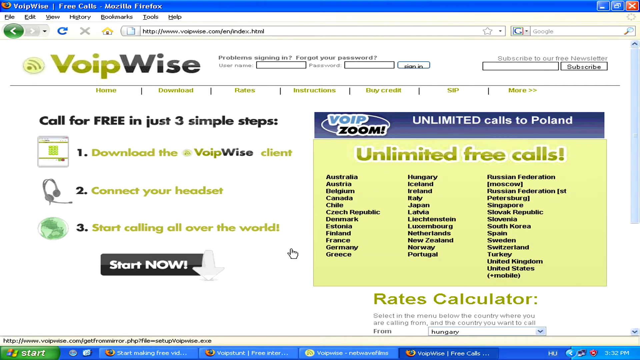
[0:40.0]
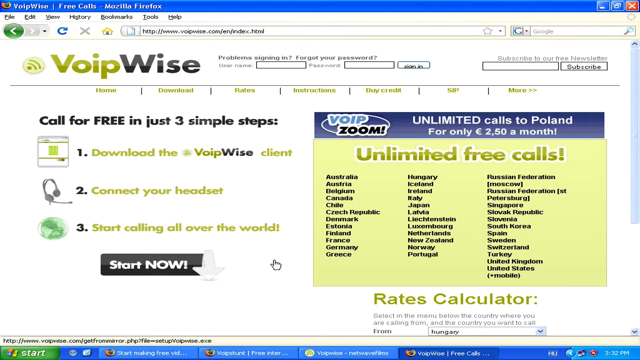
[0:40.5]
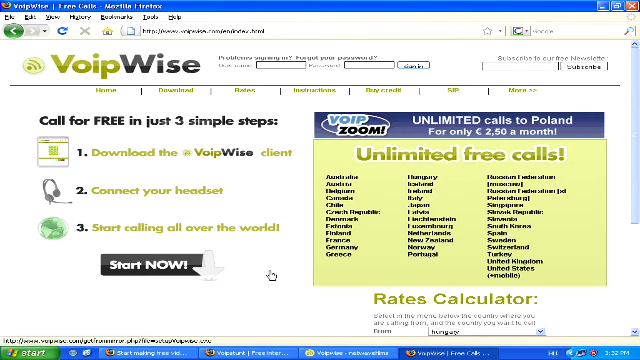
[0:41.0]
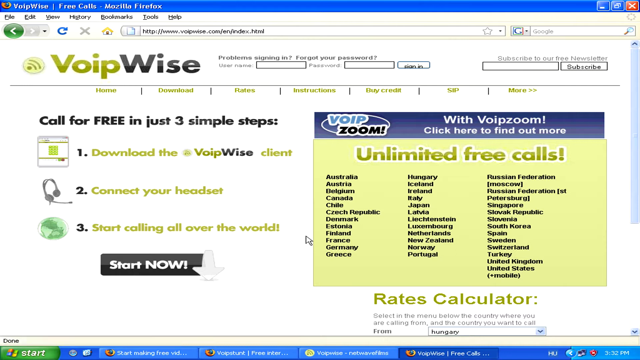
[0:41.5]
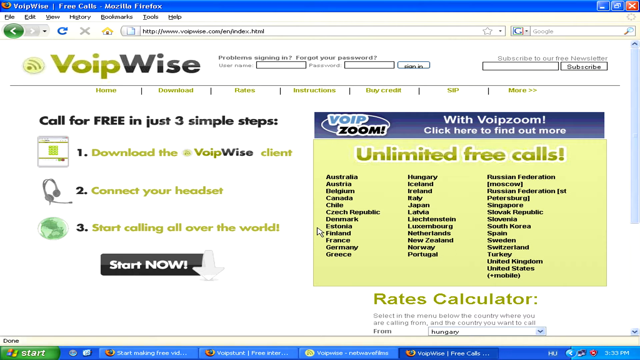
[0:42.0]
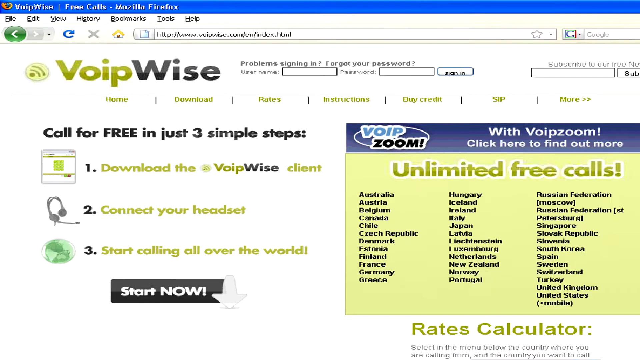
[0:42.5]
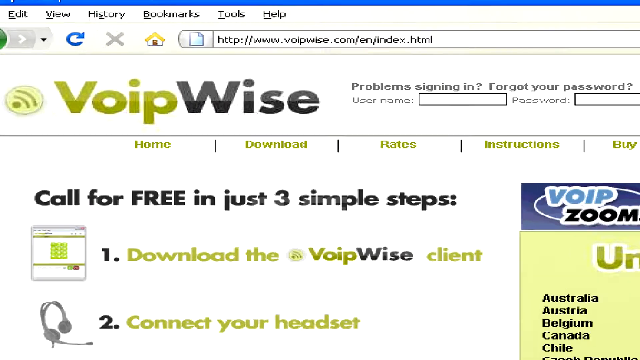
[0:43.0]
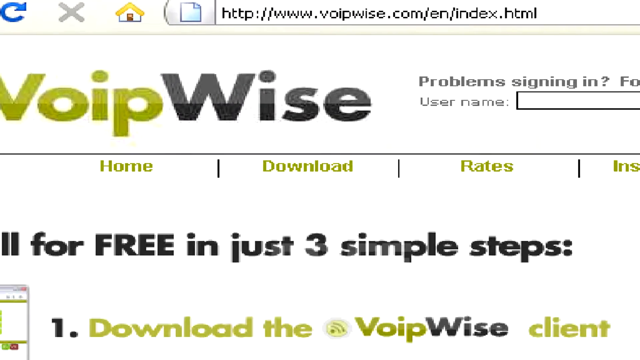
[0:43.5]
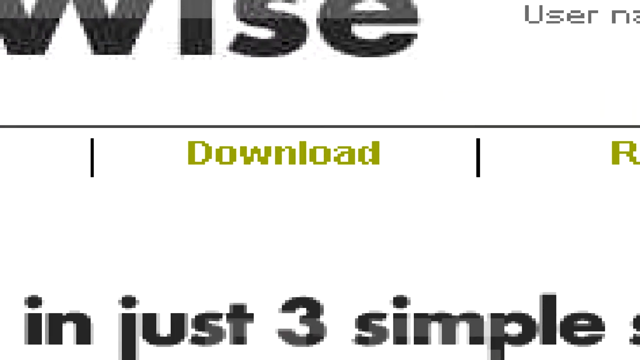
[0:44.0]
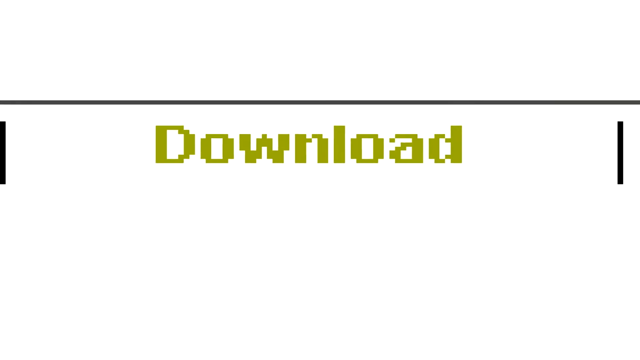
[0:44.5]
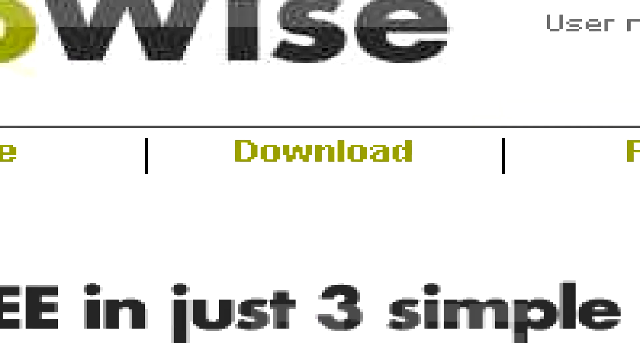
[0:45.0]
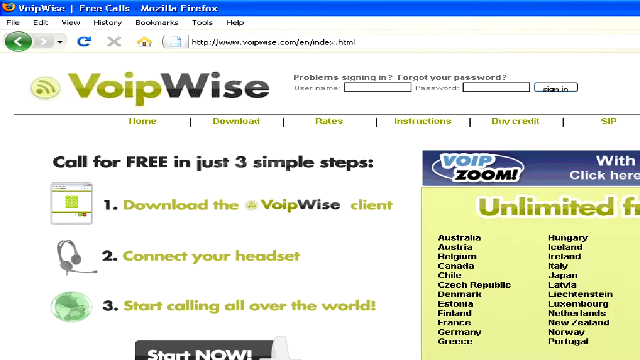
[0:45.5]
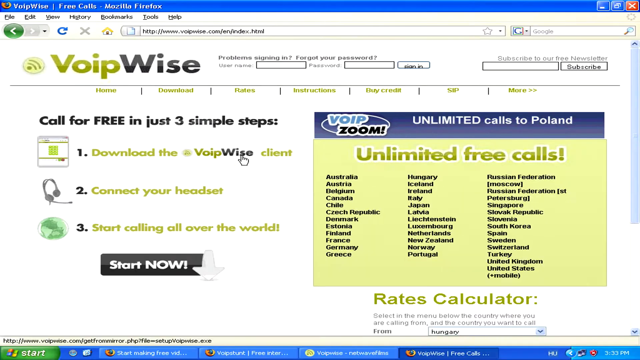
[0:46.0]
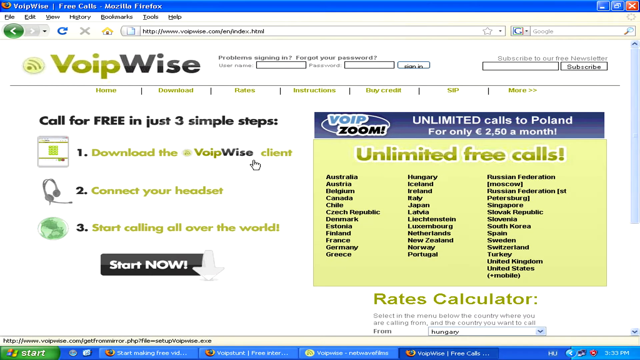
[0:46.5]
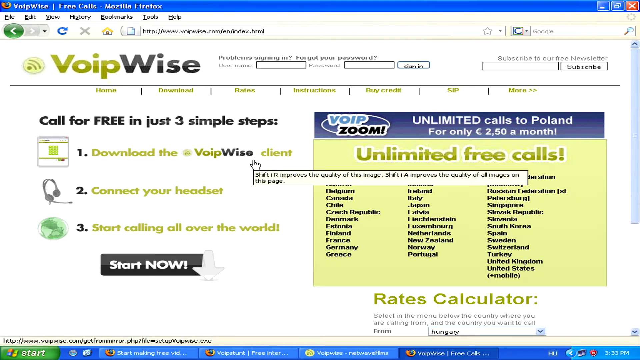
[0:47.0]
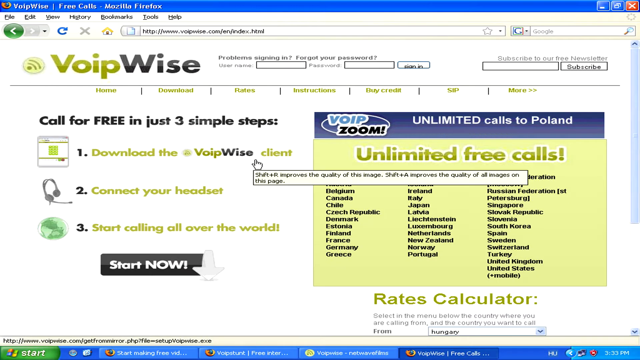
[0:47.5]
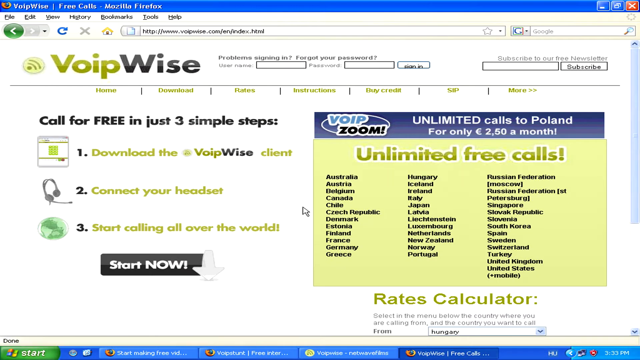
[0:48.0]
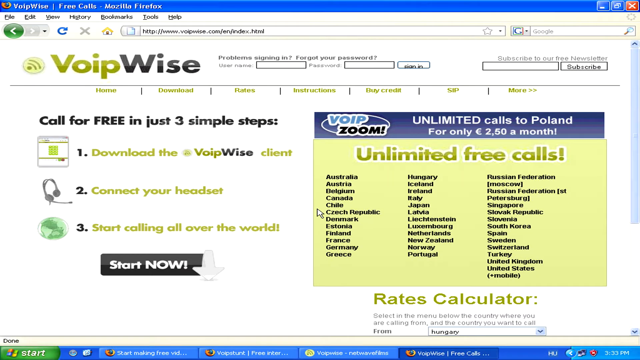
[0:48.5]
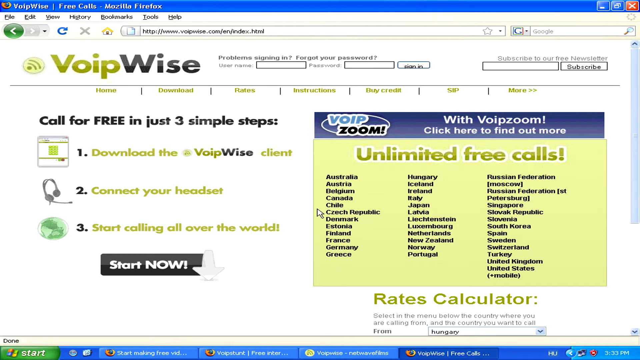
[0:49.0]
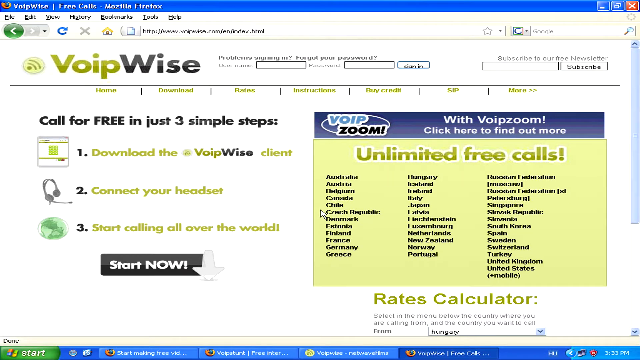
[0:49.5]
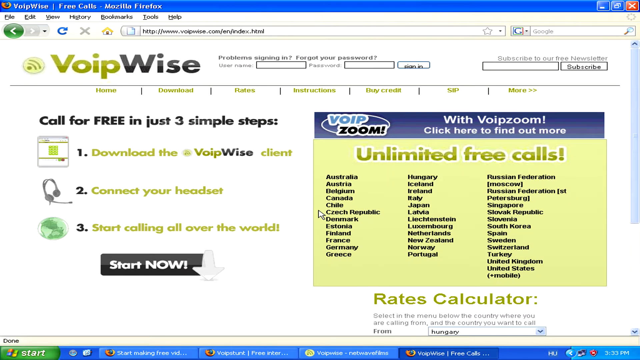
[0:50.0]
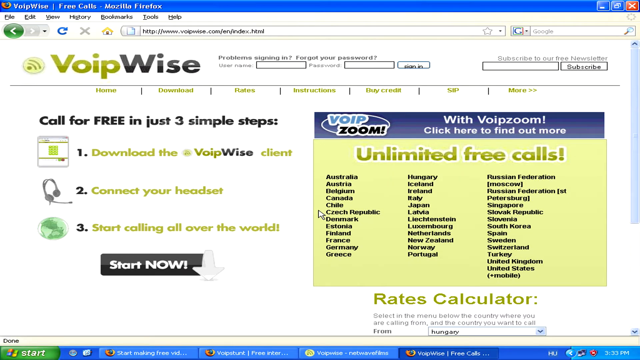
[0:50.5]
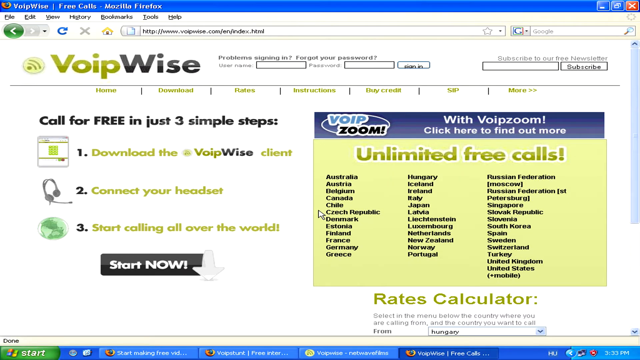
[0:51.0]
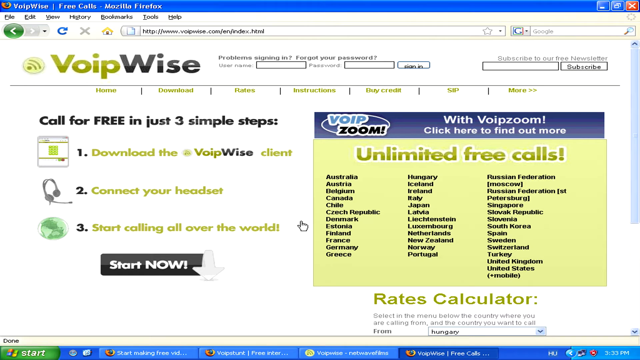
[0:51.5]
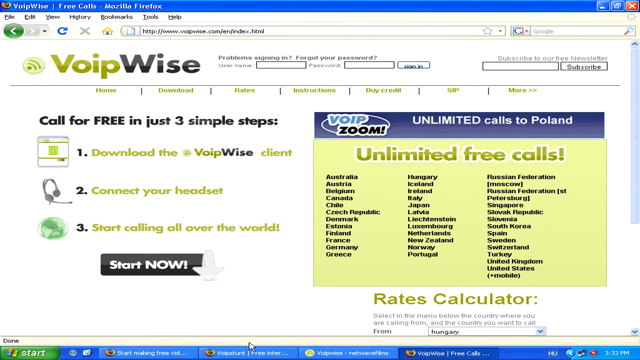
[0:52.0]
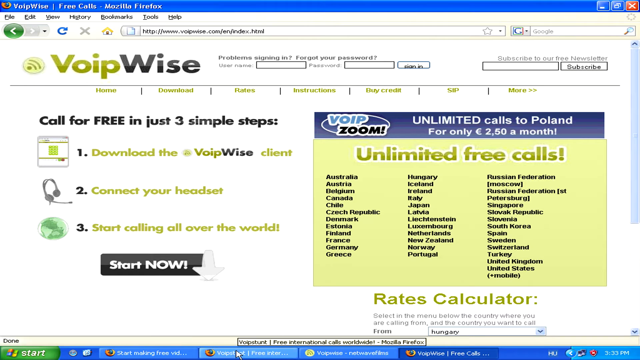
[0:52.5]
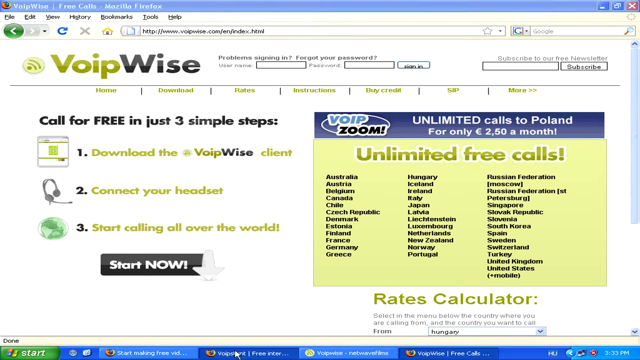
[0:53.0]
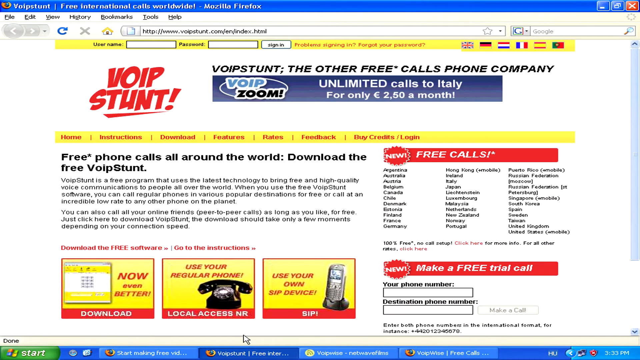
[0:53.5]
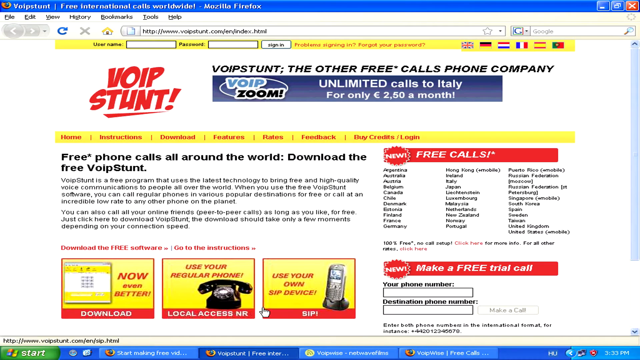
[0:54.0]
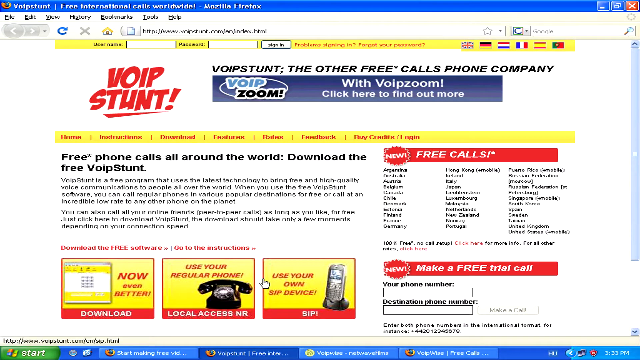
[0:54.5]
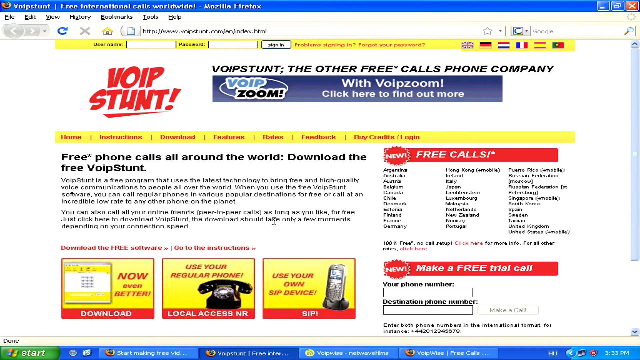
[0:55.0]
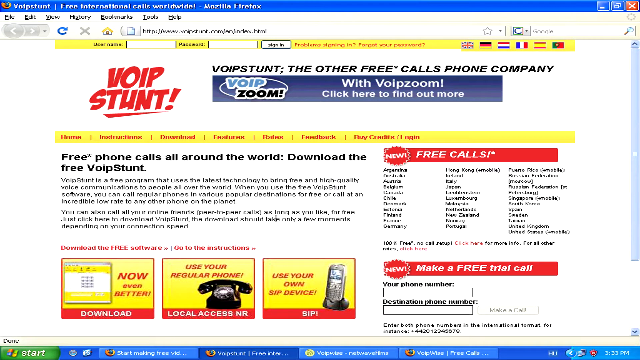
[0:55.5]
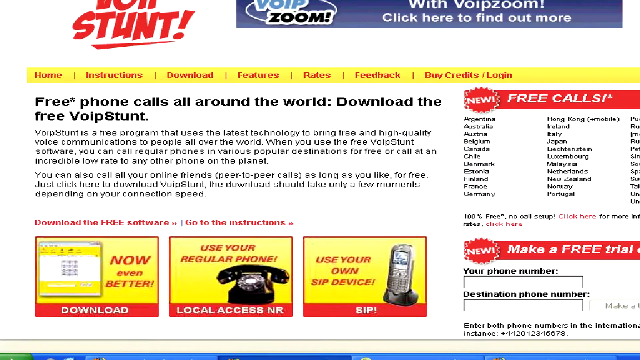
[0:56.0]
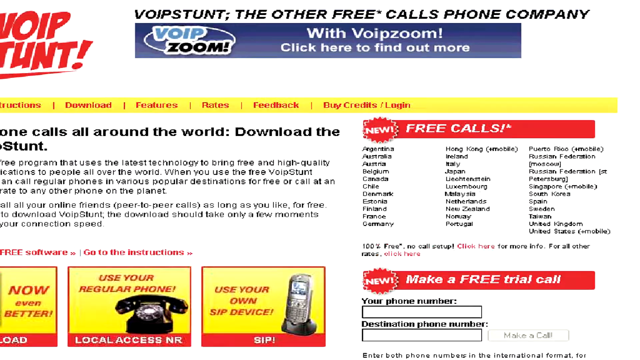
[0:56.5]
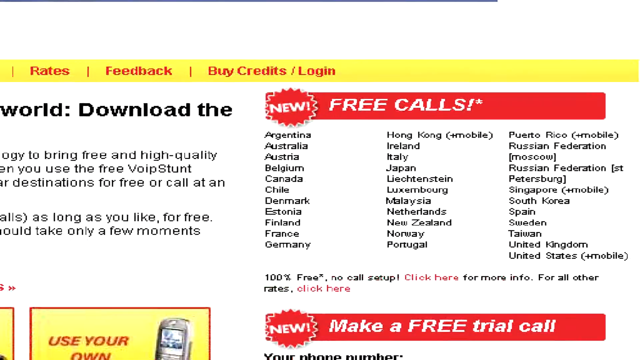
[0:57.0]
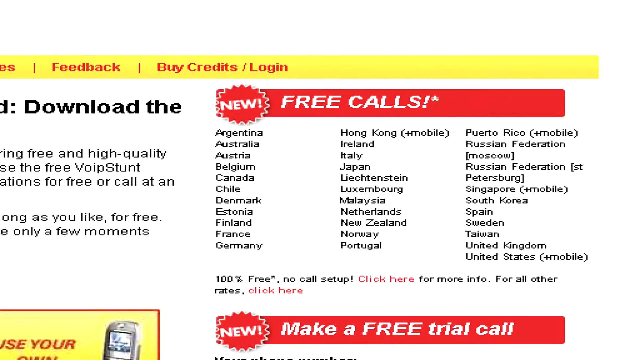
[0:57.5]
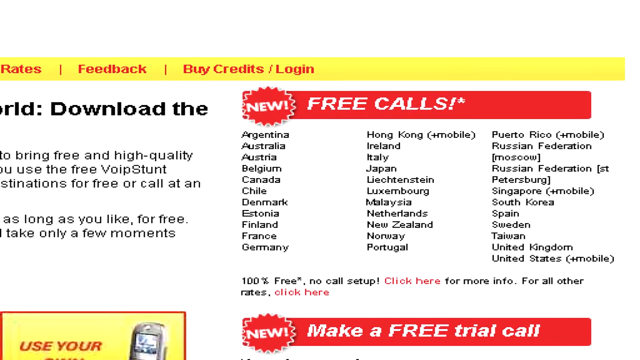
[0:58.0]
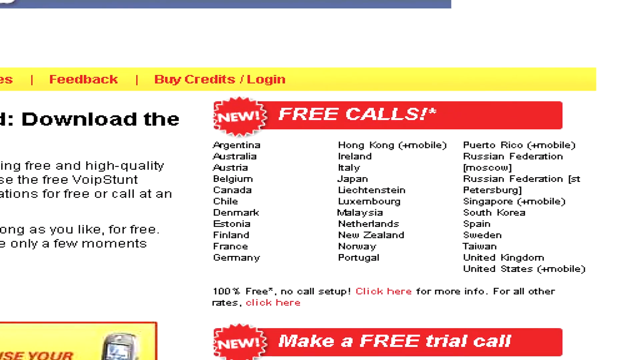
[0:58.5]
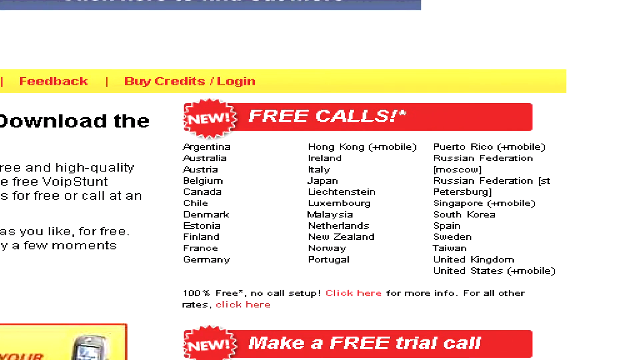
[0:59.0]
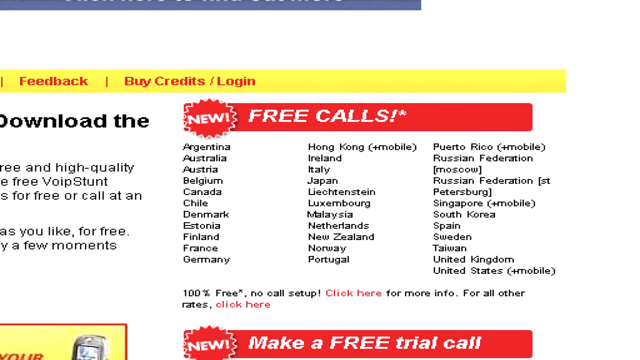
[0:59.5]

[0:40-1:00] The view zooms in as the mouse moves around the screen over a colorful website. It looks like a website for getting a number to make unlimited free VoIP calls in simple steps: download from the website, connect a headset and start making calls. The website is an old one.